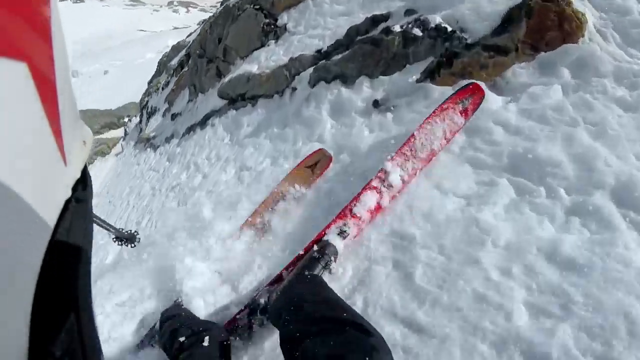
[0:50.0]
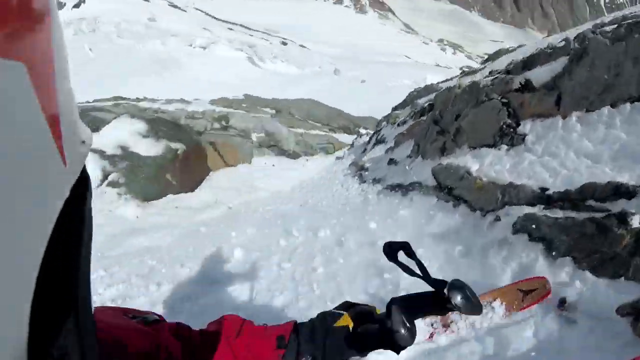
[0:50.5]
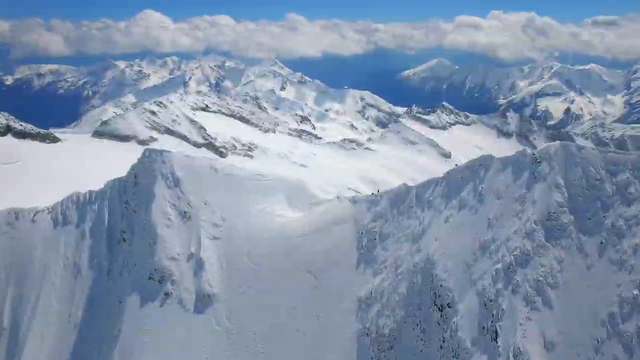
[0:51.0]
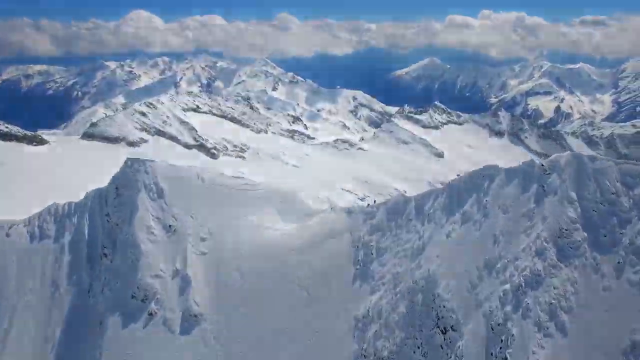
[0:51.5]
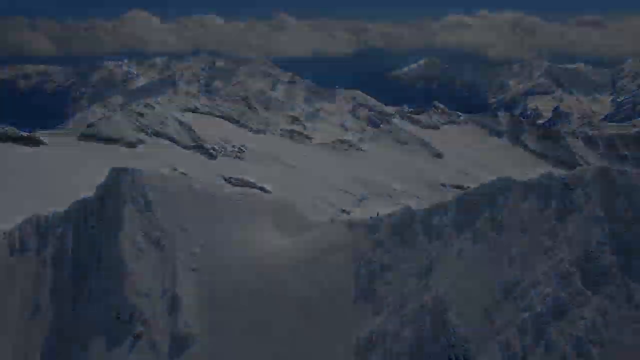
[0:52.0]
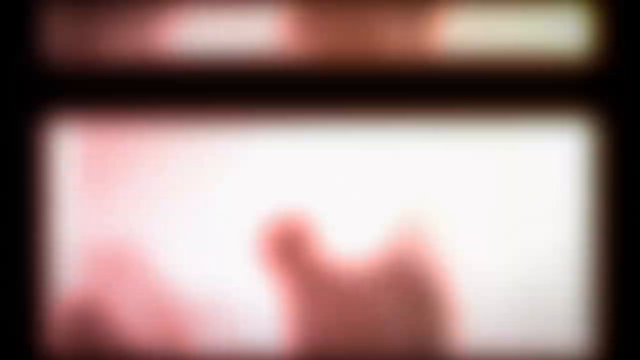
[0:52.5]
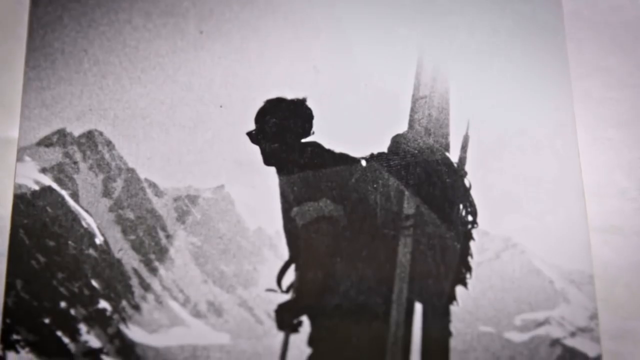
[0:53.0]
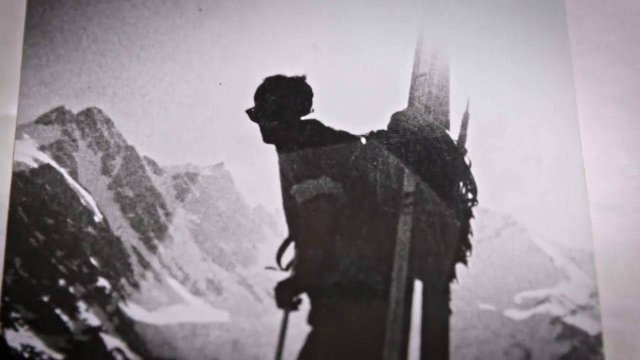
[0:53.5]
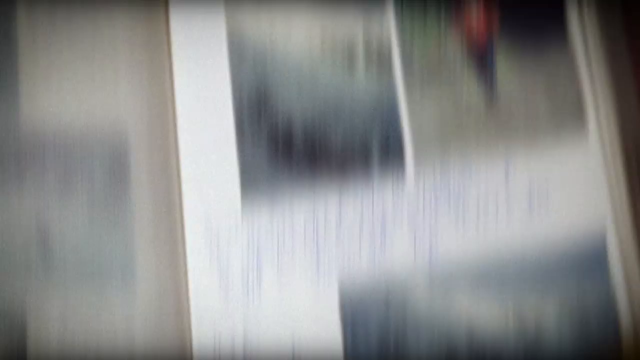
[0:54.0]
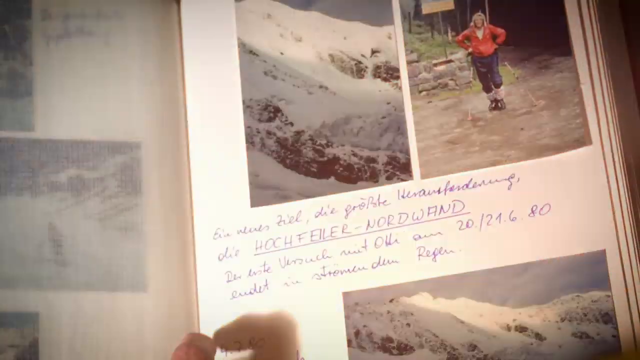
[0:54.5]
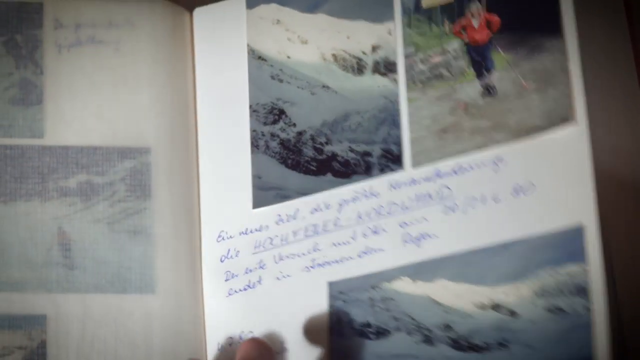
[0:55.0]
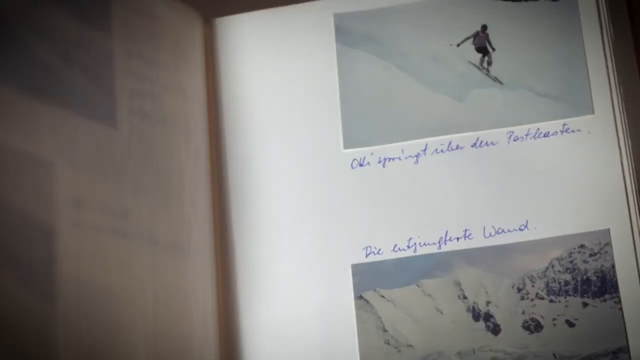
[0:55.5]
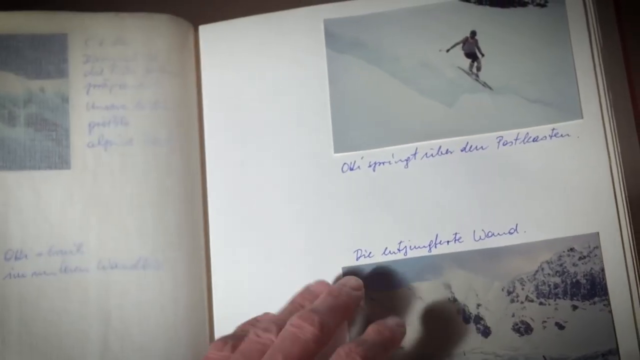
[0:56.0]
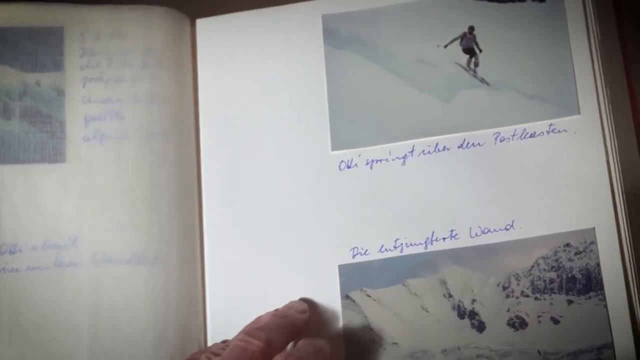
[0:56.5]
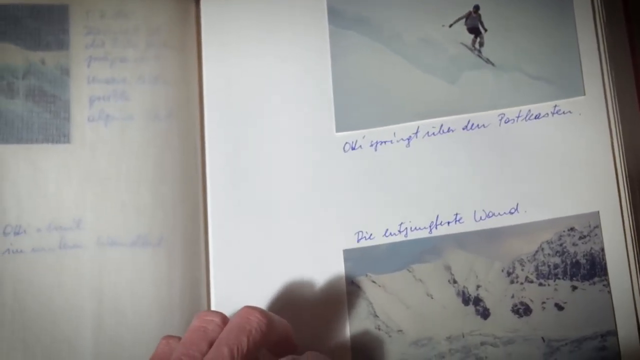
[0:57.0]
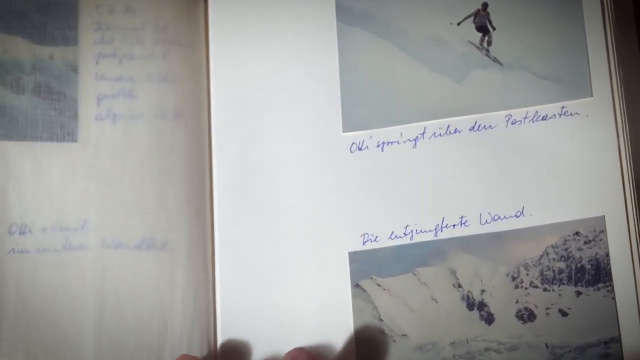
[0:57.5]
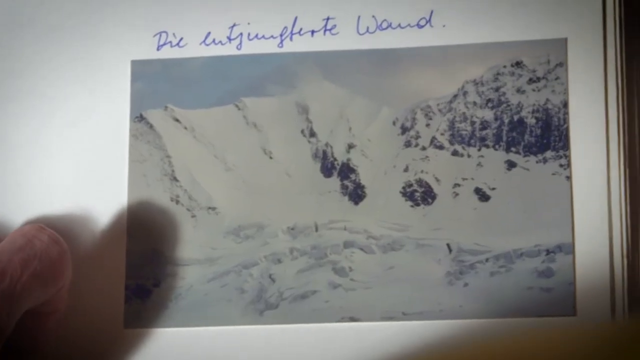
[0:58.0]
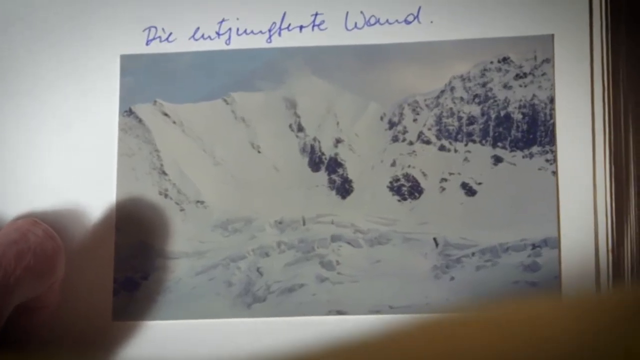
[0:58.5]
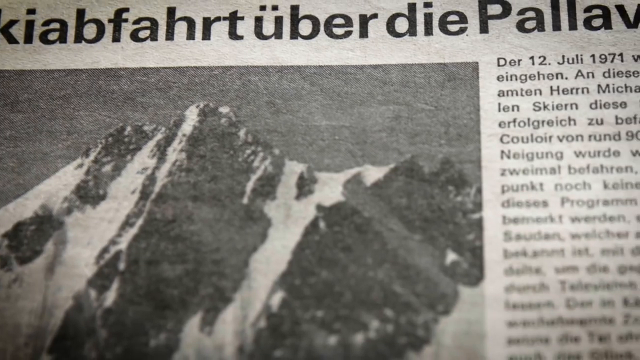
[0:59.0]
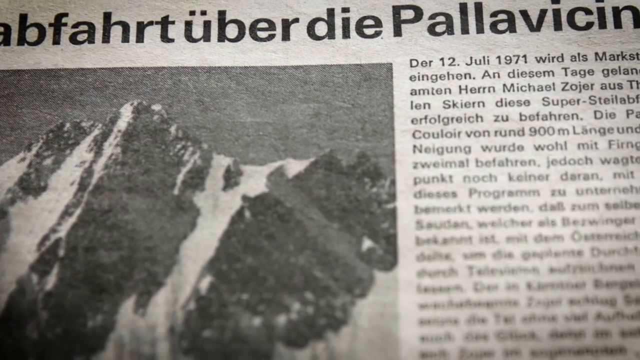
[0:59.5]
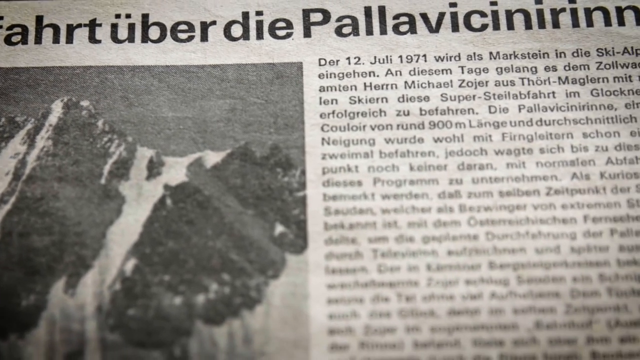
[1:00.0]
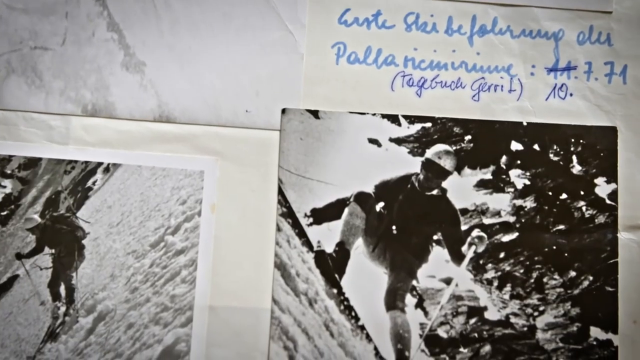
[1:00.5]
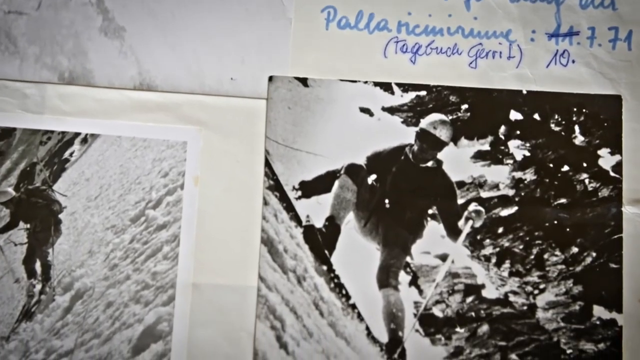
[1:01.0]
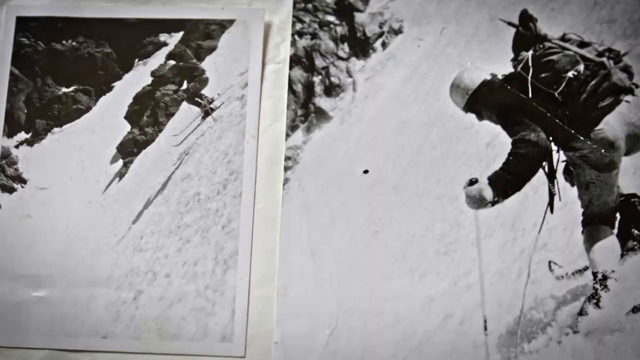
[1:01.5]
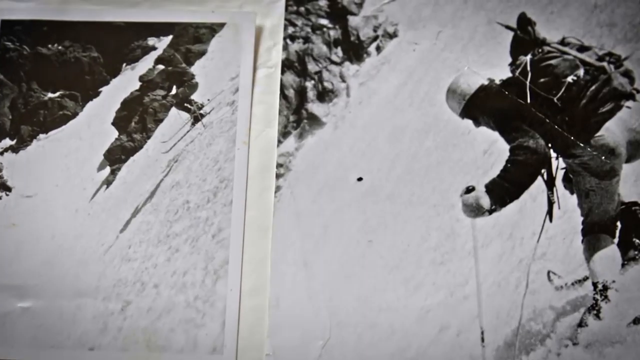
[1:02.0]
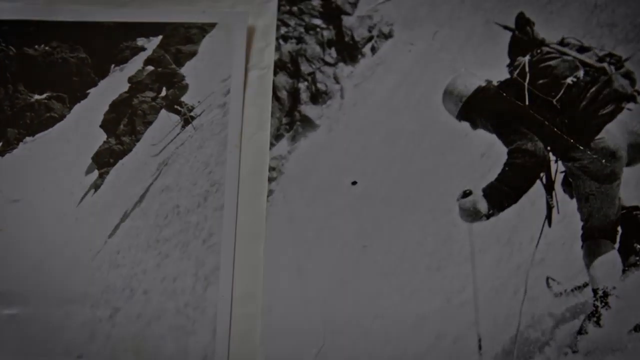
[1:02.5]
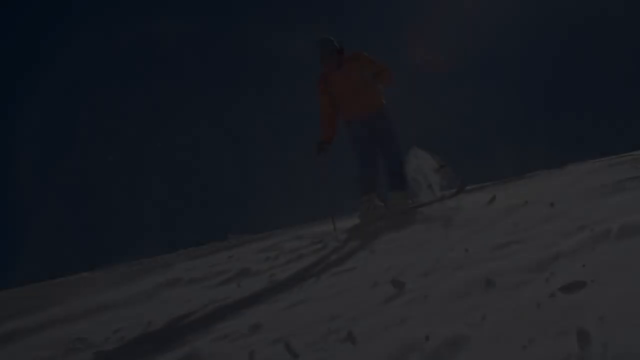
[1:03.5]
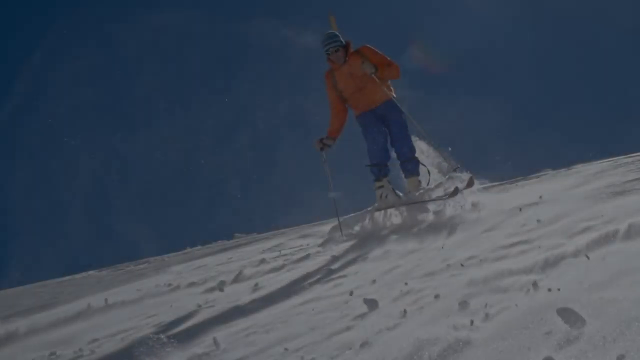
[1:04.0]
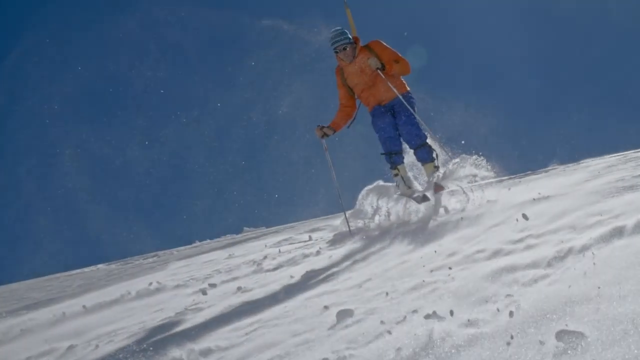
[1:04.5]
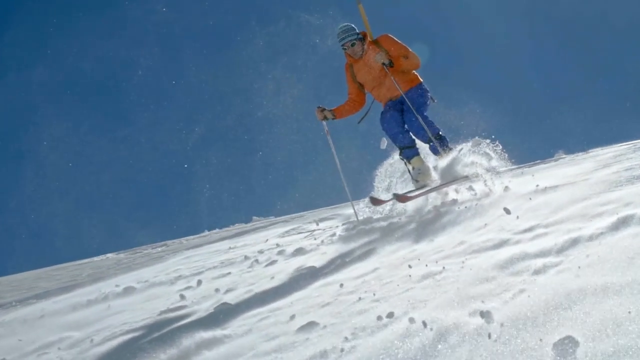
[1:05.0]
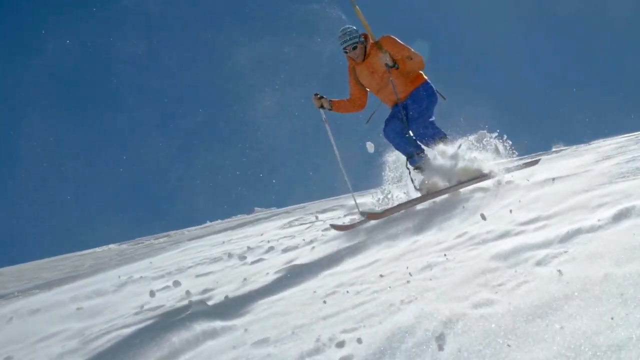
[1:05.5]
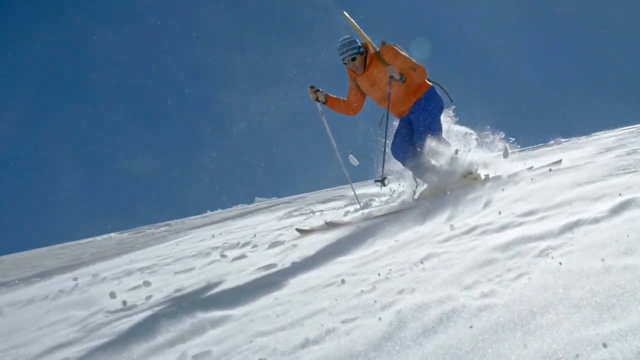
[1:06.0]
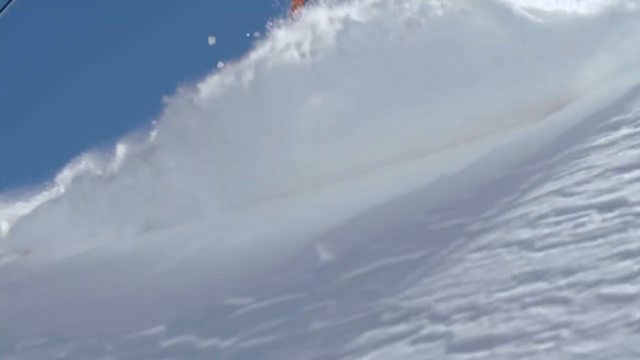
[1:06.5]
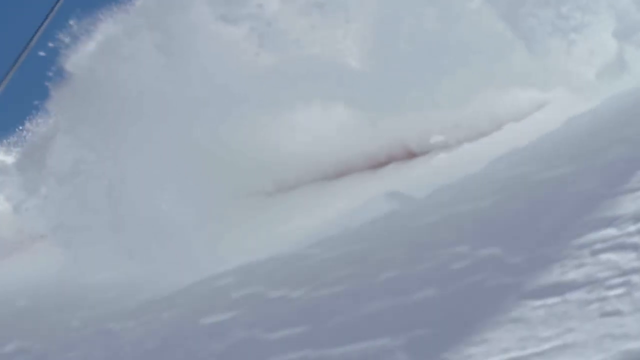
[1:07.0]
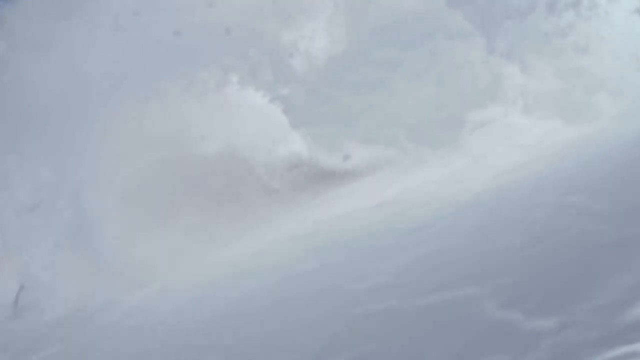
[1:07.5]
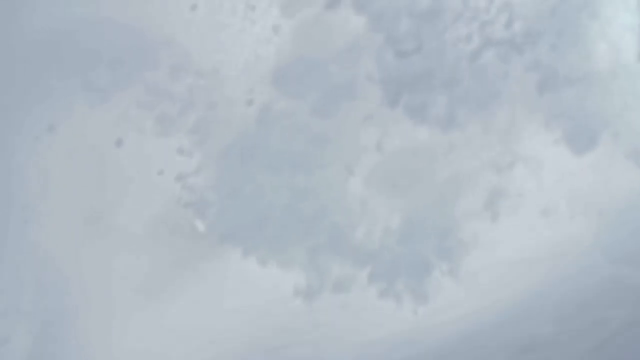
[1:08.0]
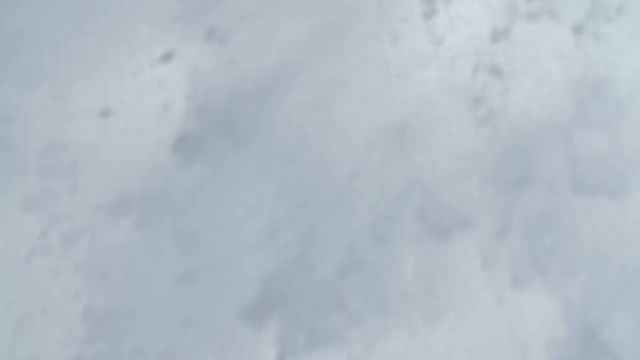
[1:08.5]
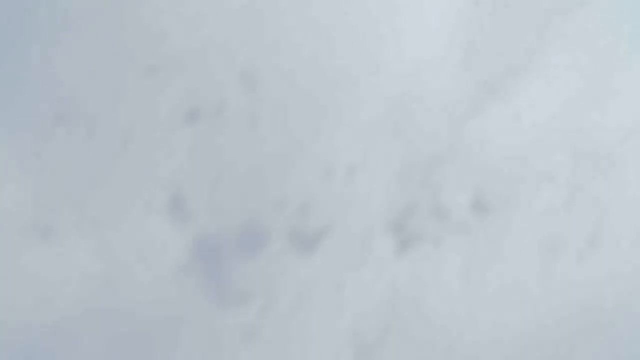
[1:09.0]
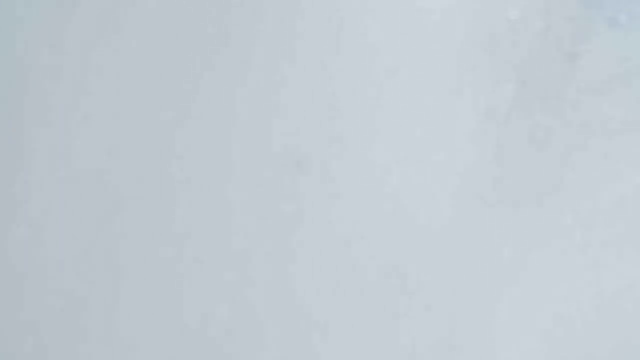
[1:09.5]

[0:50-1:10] A top view of the mountain is displayed. The camera transitions to a picture of a man that almost looks like a silhouette; he is on a mountain with ice skating gear. The camera zooms away from the picture to show that it is a photograph in a photo album, and a hand pages through it. There are handwritten captions below the photos, and a date of seemingly around 12th July 1971. The images in the photo album are black and white. Then a man in a blue jersey is about to be shown skidding down the icy mountain.